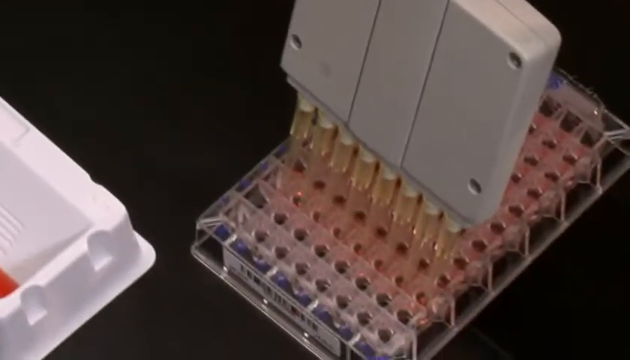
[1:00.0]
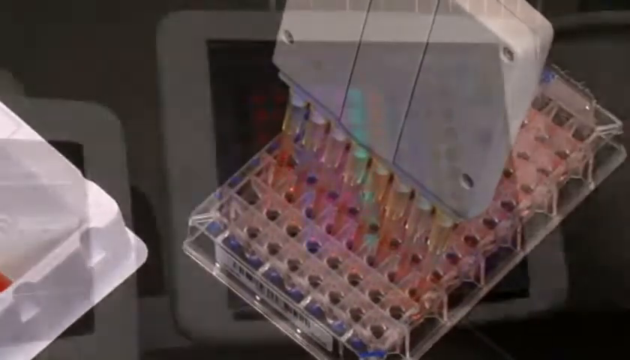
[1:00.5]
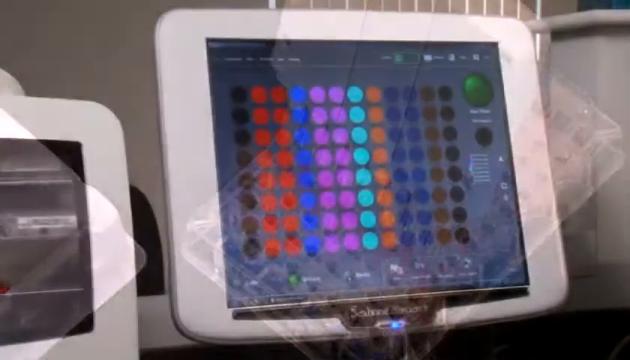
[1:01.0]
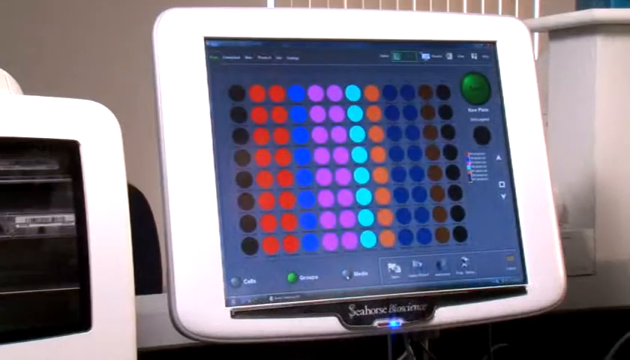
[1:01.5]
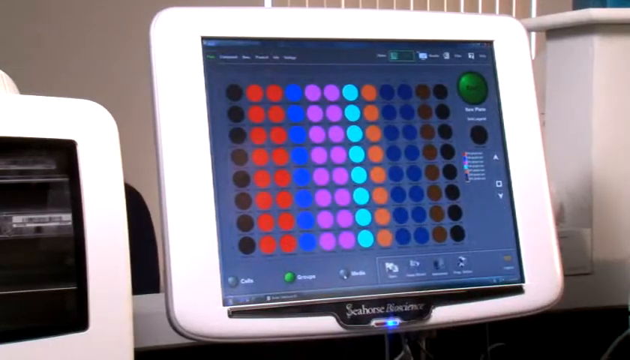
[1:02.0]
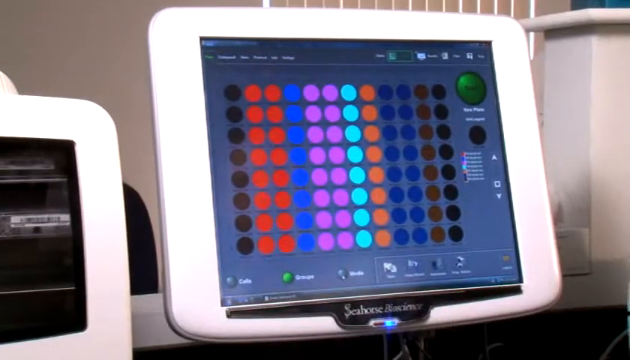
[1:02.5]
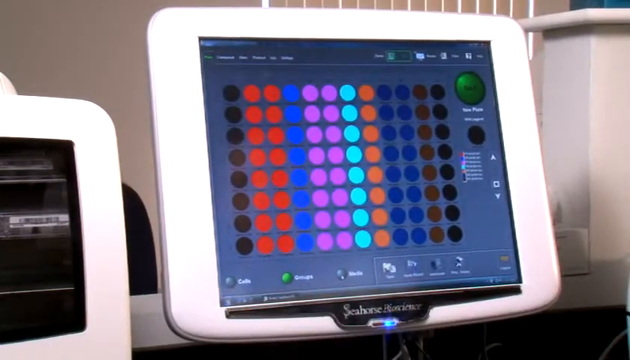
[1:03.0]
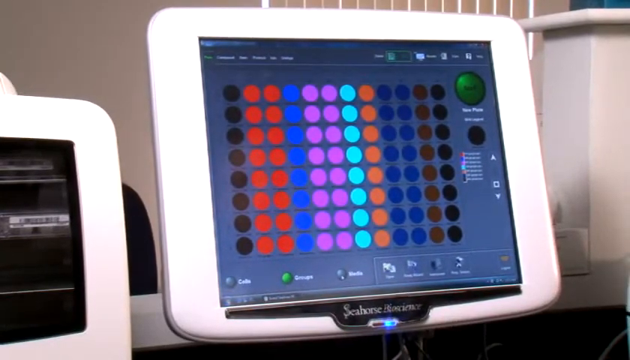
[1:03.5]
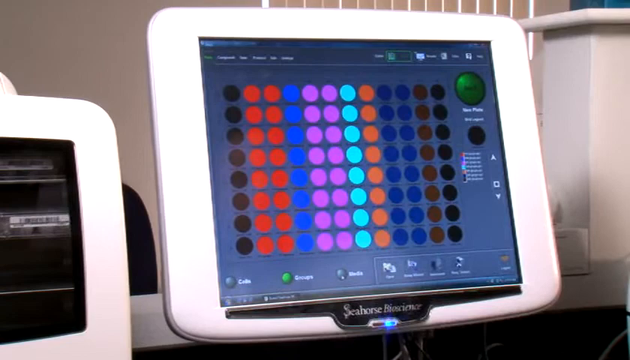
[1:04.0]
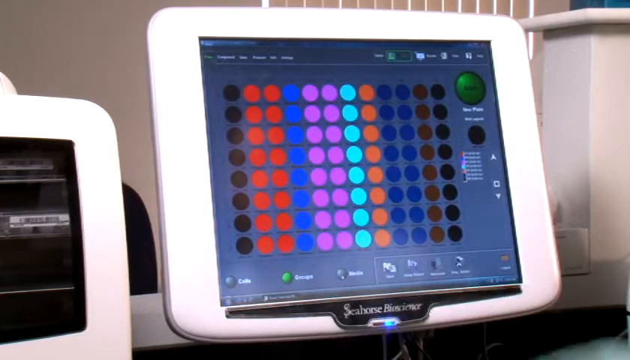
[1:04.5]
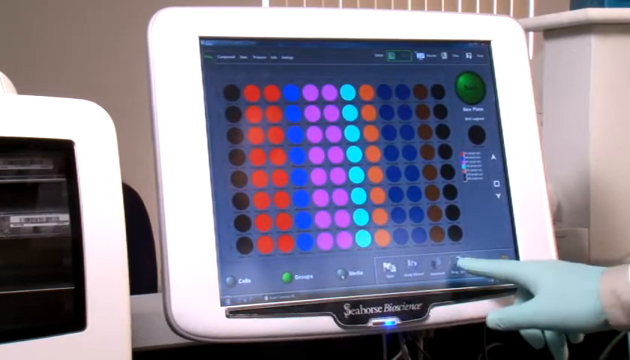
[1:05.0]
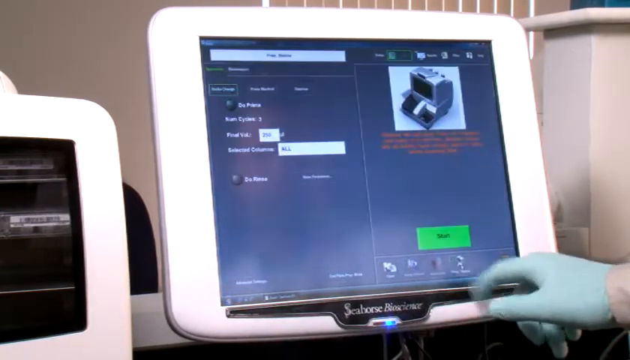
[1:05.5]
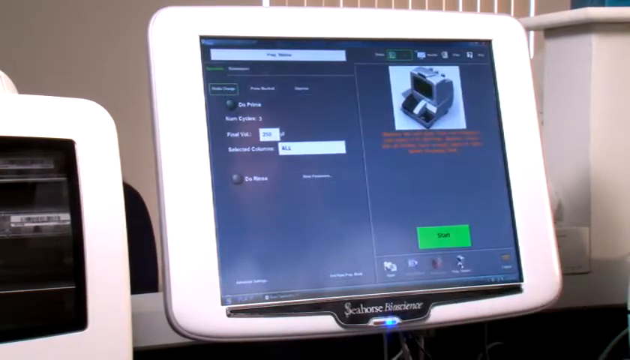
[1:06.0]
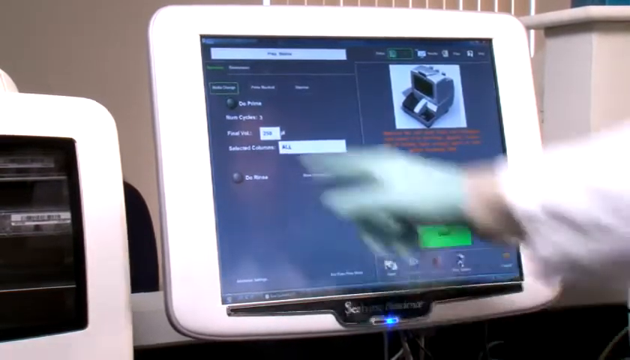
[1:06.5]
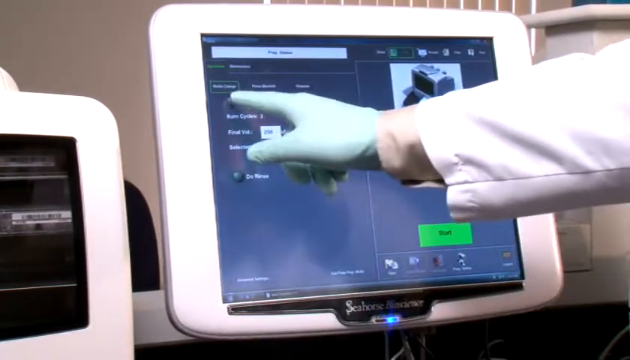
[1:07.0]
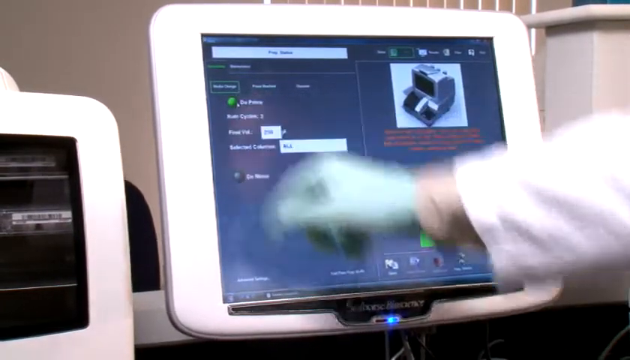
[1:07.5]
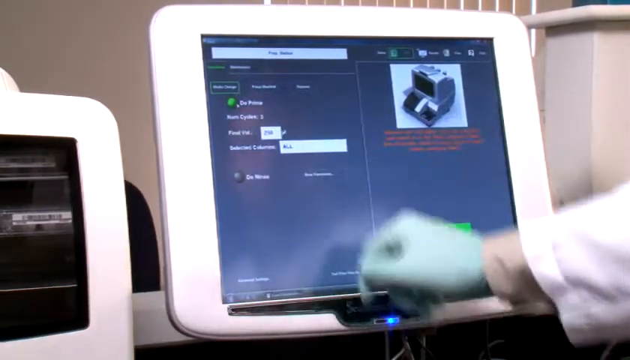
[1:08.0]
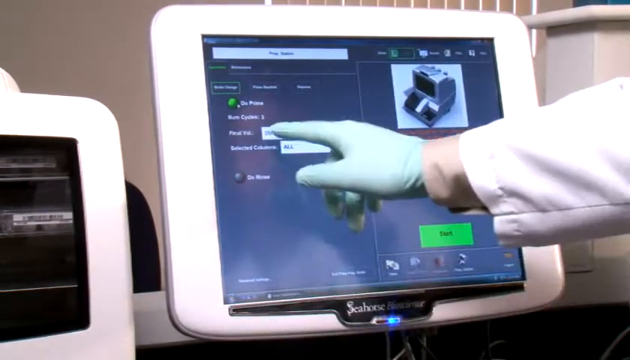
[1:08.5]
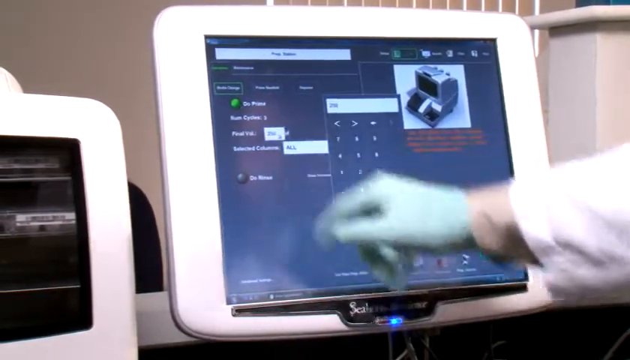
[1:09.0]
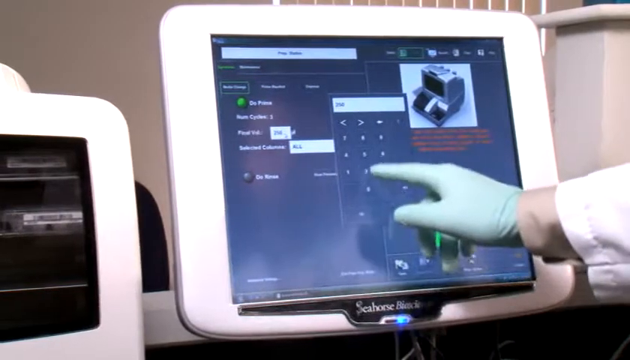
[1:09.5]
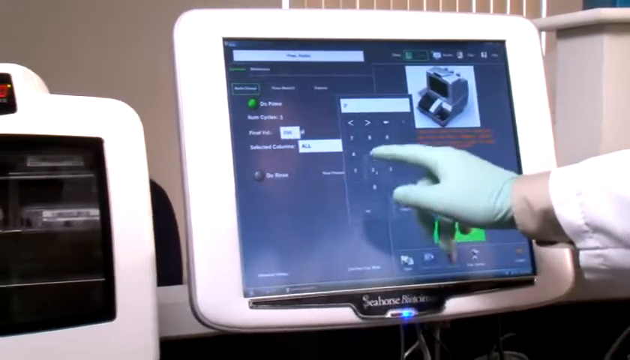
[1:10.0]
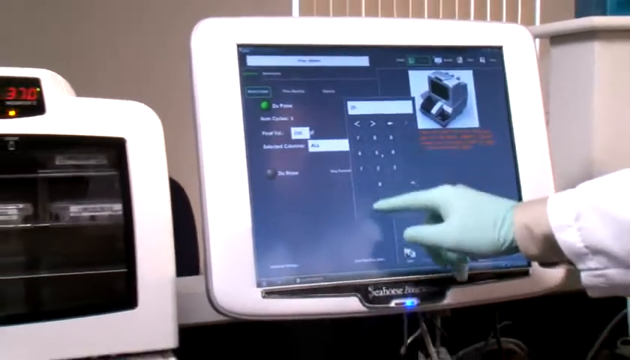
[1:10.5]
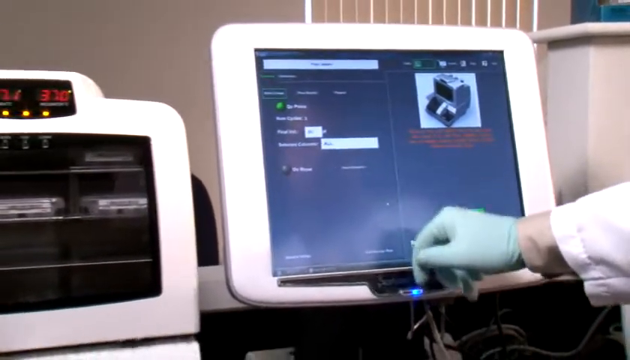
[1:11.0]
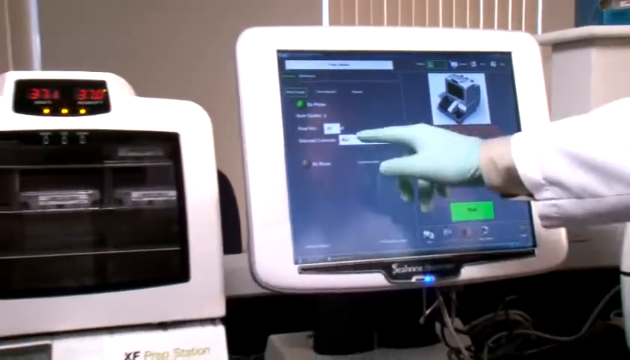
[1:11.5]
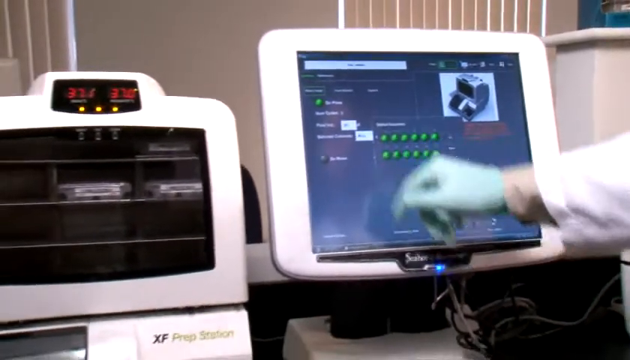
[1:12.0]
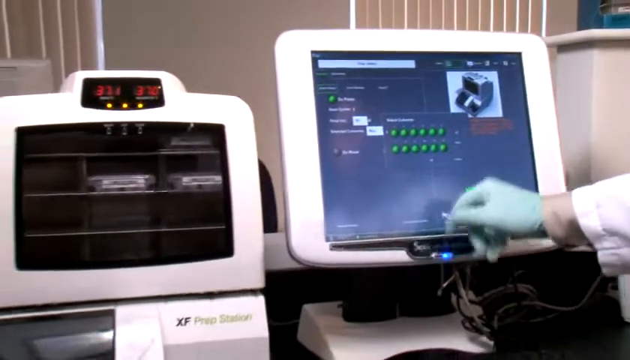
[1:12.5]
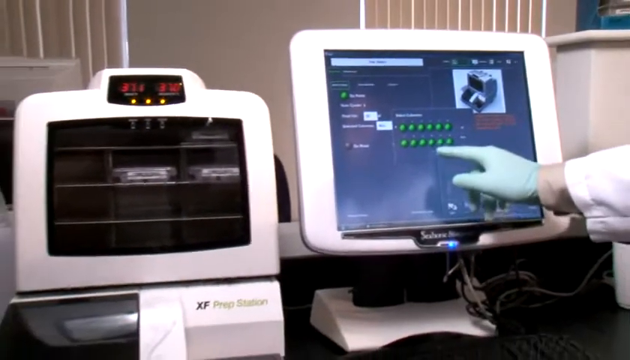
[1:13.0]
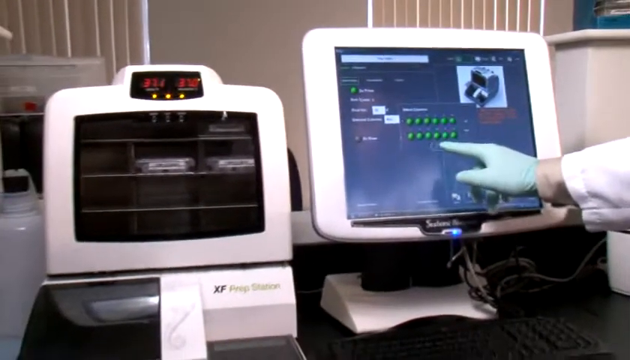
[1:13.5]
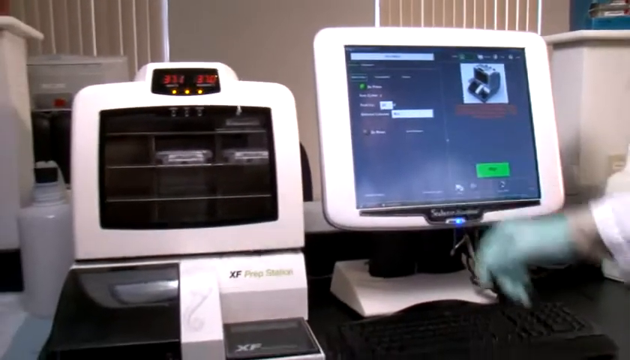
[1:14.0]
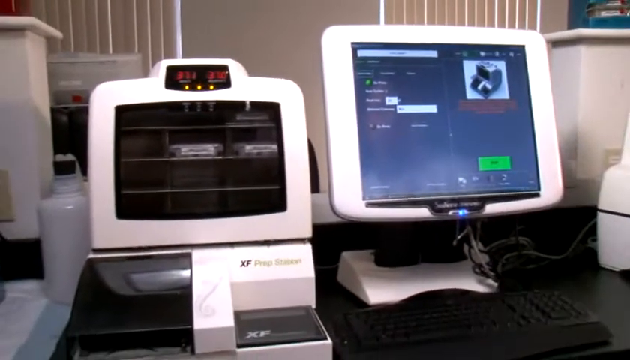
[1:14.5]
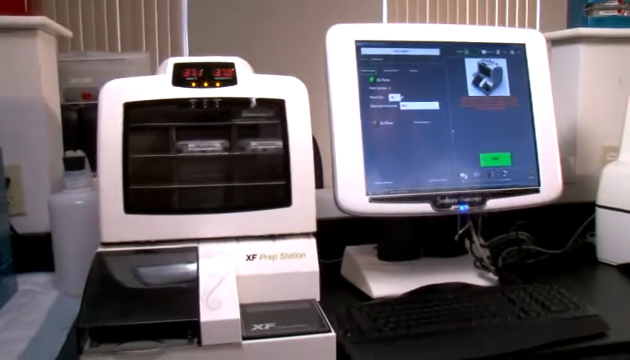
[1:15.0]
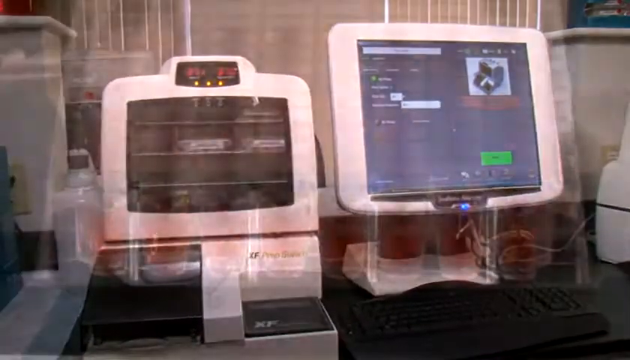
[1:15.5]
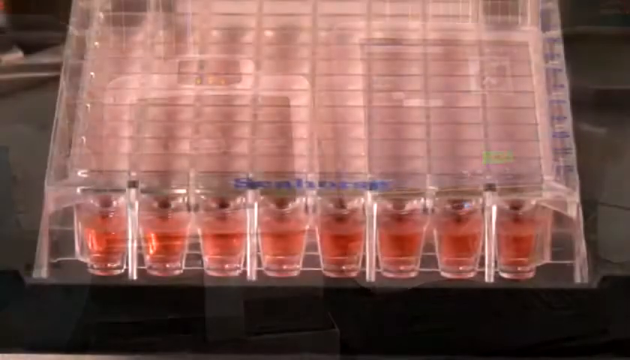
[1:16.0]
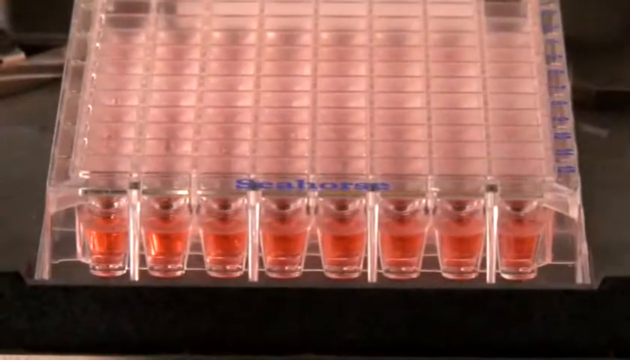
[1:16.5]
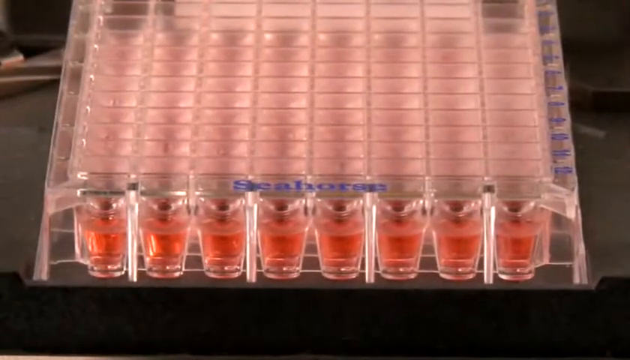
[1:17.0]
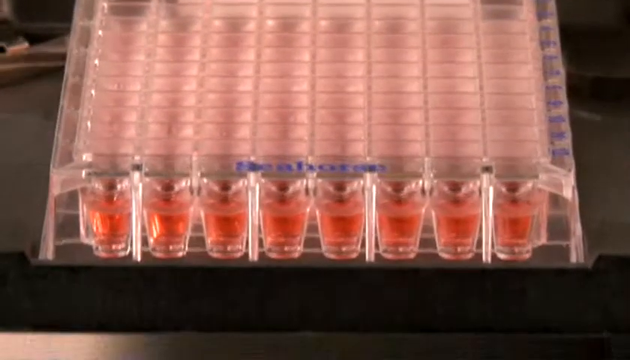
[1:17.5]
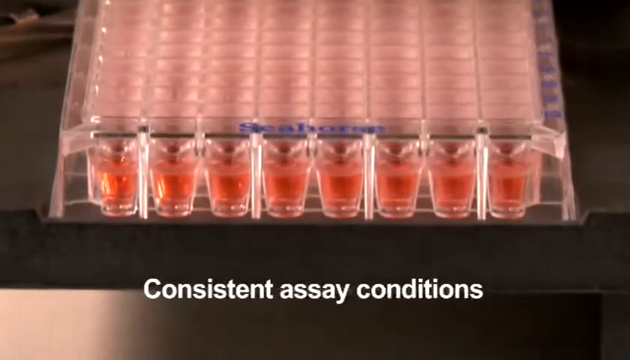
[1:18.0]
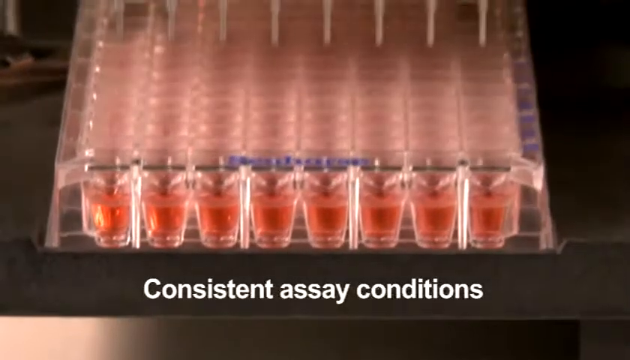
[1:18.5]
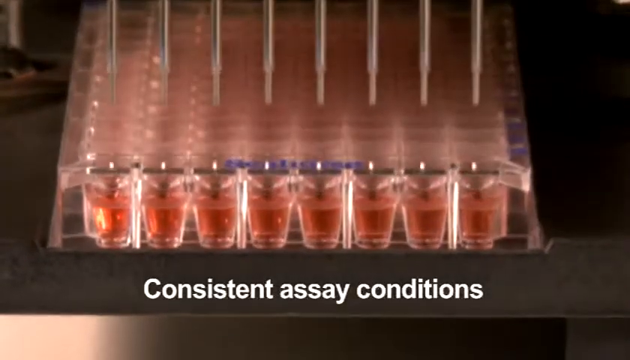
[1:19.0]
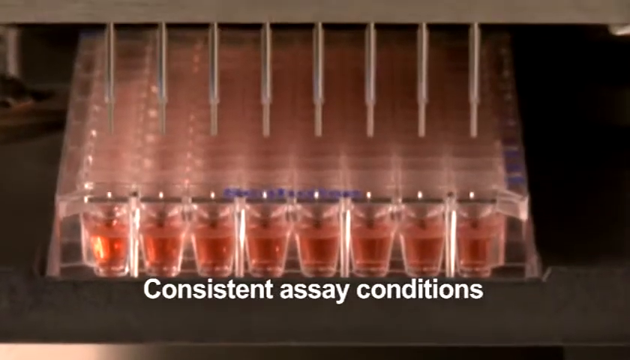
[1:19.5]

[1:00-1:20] A close-up shows the LED screen of a machine with a white frame. The screen displays 12 columns of circles, with 8 circles in each column. The circles in the left column are deep brown, the second and third columns are red, the fourth is blue, the fifth and sixth are purple, the seventh is green, the eighth is orange, the ninth and tenth are deep blue, the 11th is reddish brown, and the 12th column looks black. The screen stays in view for a few moments. Then a person's gloved hand touches a button on the touch screen and begins operating the machine, clicking buttons and entering data into the data fields on the interface. Next, the pink liquids that have been transferred are shown, with text across the bottom of the screen reading "consistent assay conditions".